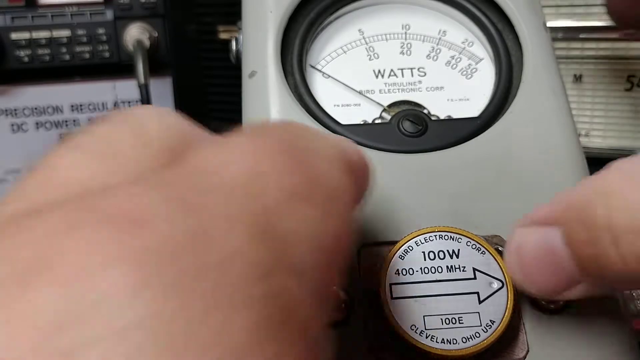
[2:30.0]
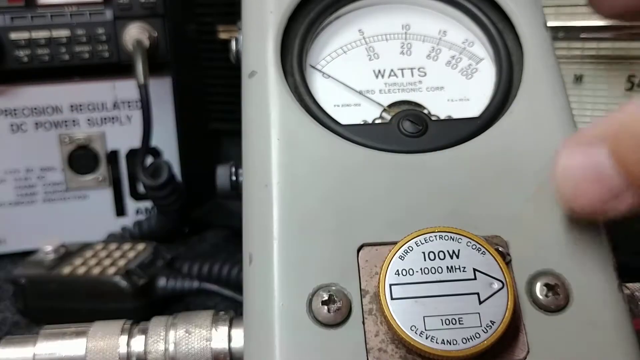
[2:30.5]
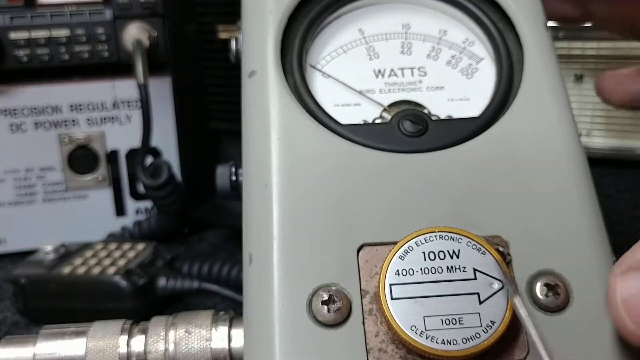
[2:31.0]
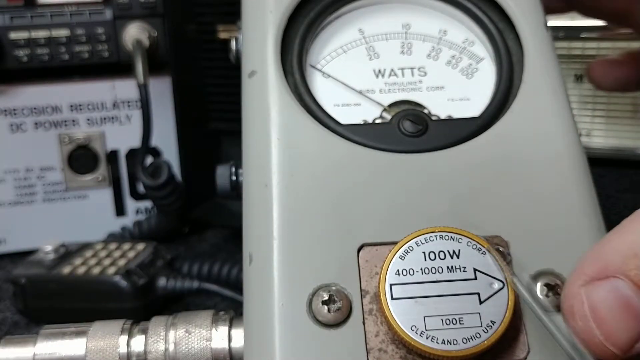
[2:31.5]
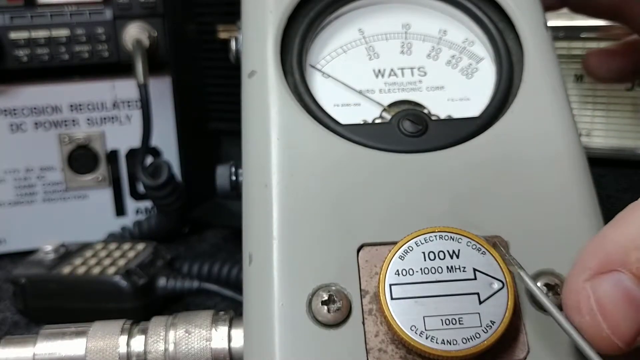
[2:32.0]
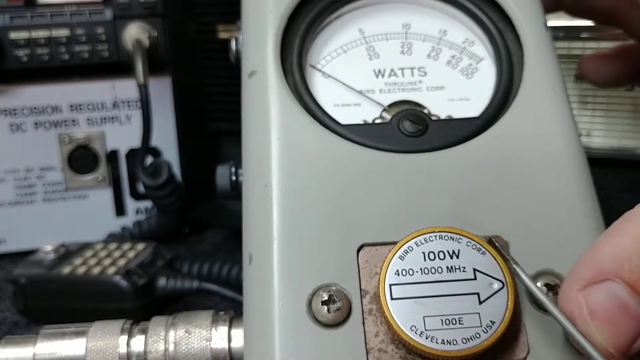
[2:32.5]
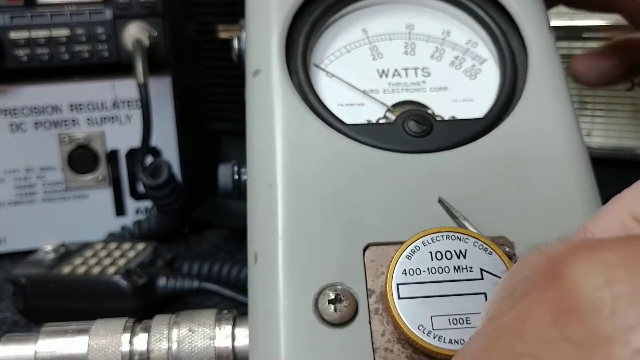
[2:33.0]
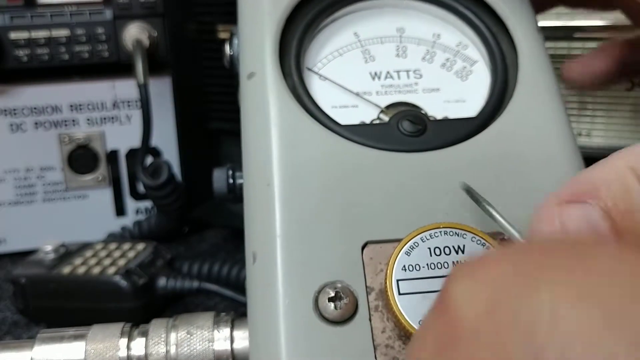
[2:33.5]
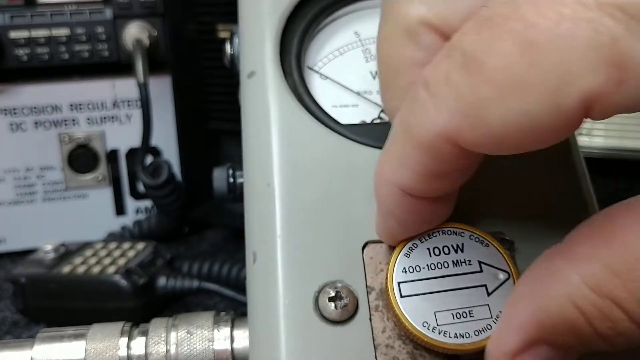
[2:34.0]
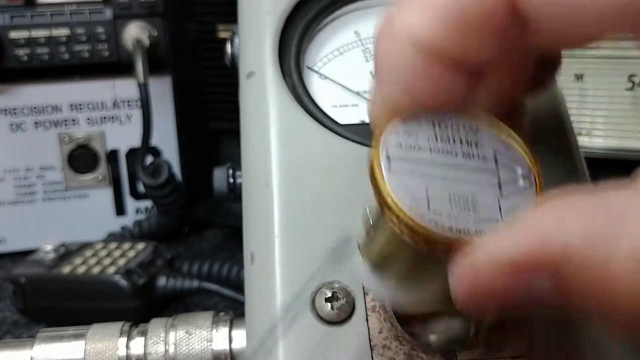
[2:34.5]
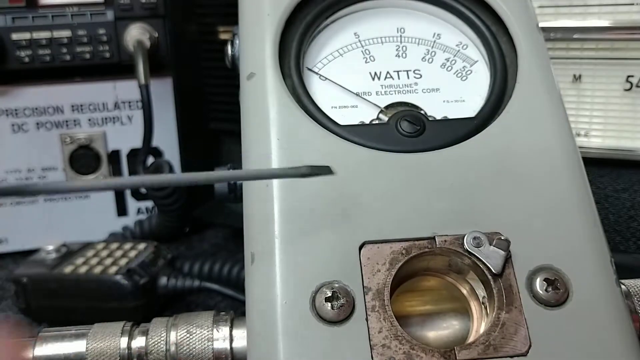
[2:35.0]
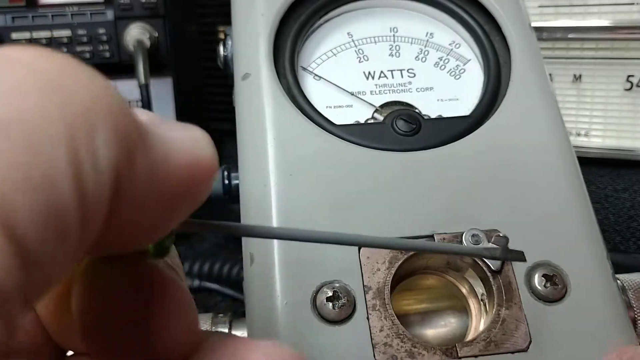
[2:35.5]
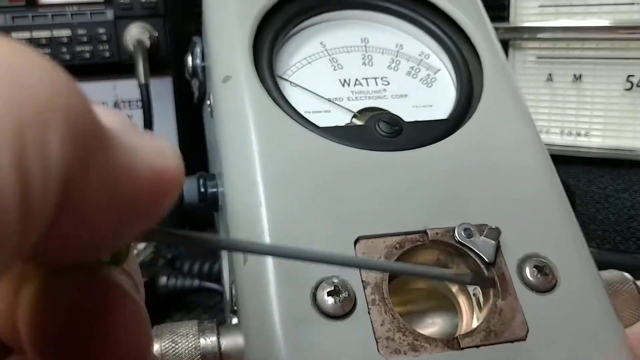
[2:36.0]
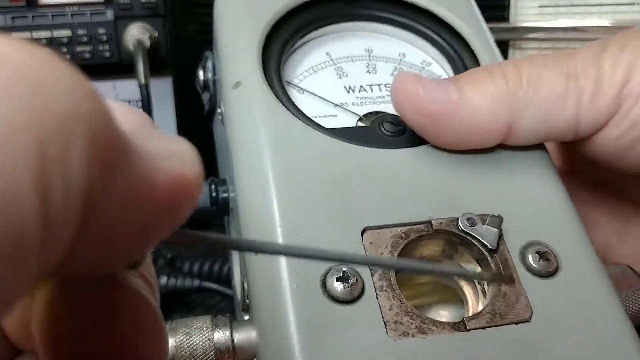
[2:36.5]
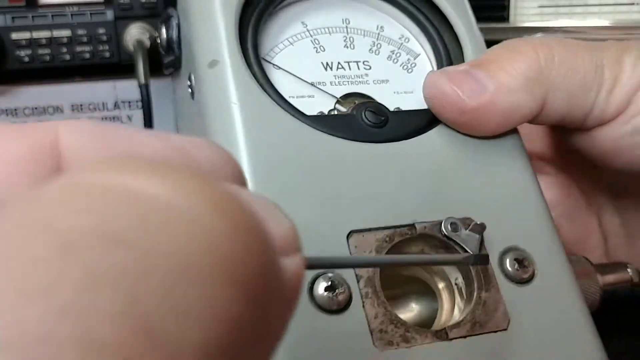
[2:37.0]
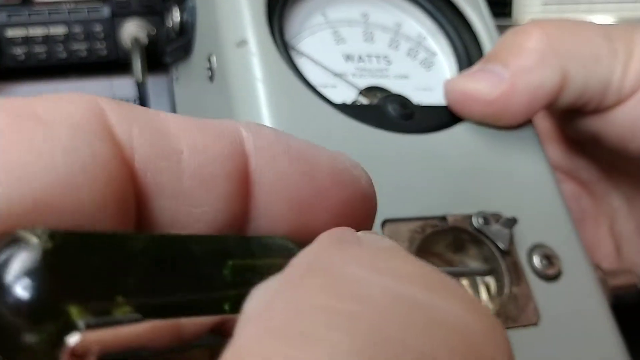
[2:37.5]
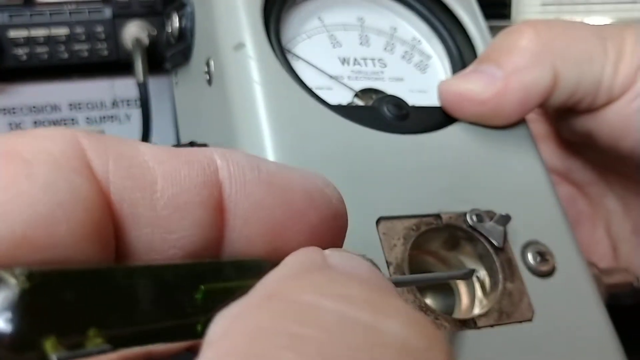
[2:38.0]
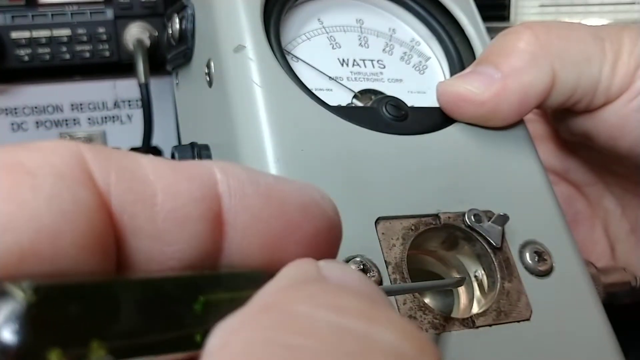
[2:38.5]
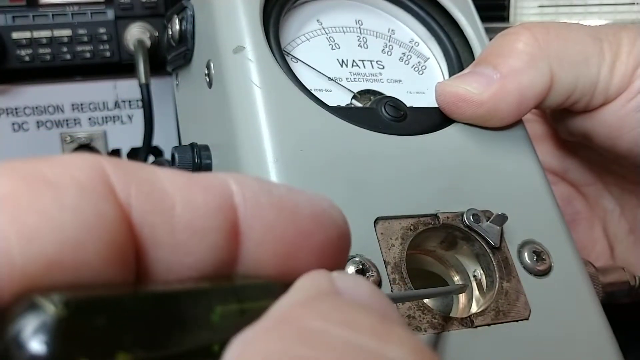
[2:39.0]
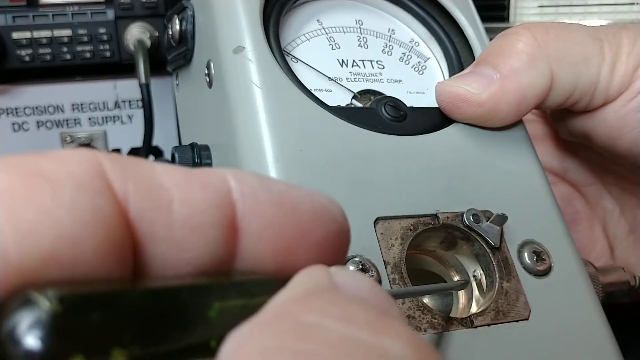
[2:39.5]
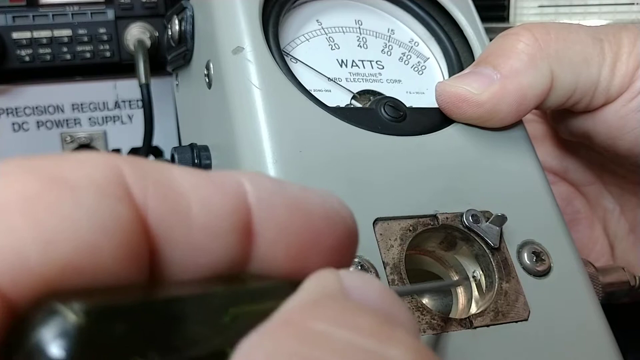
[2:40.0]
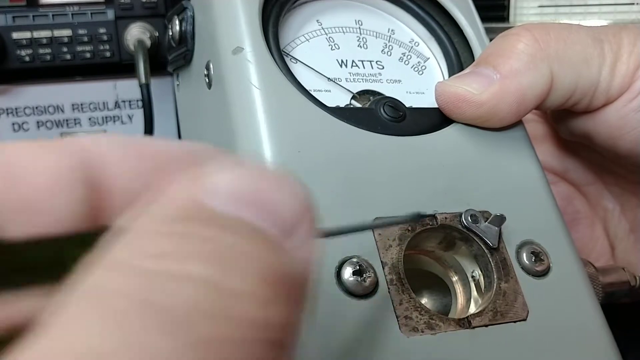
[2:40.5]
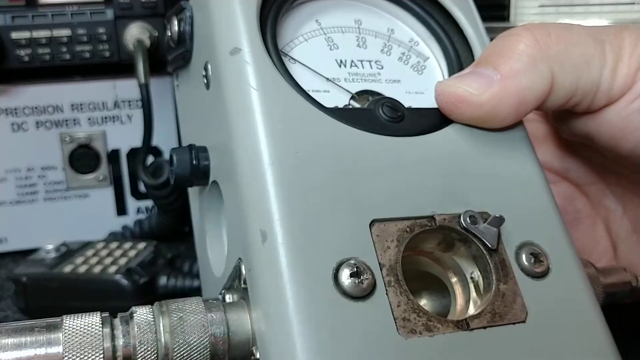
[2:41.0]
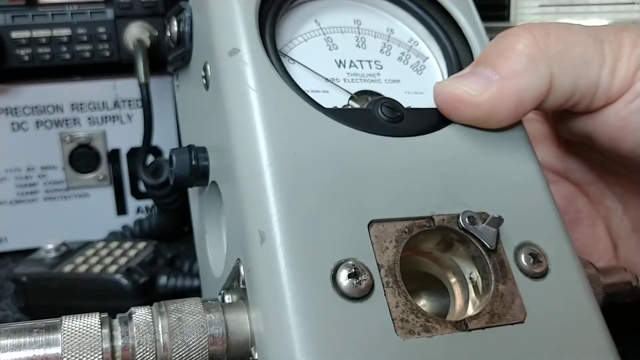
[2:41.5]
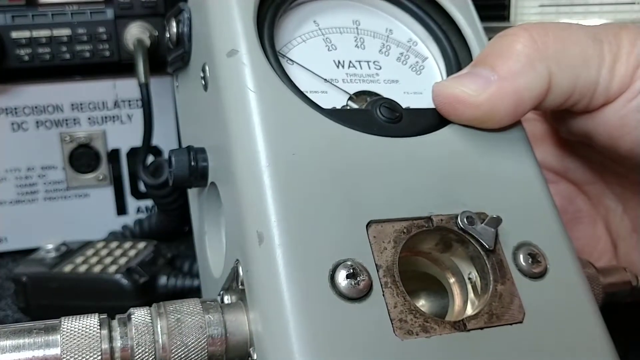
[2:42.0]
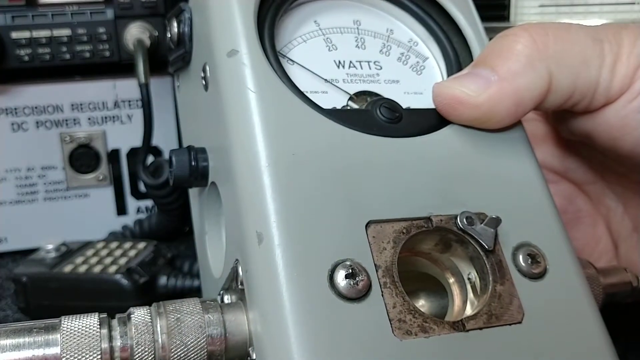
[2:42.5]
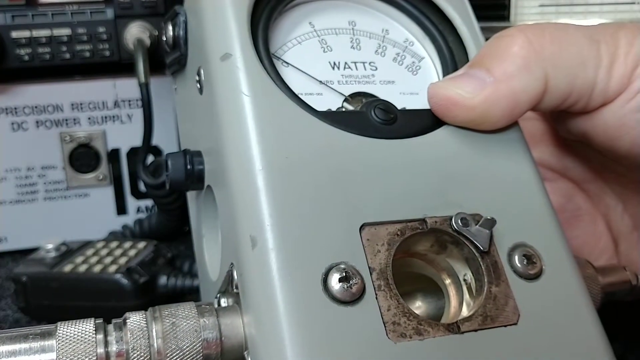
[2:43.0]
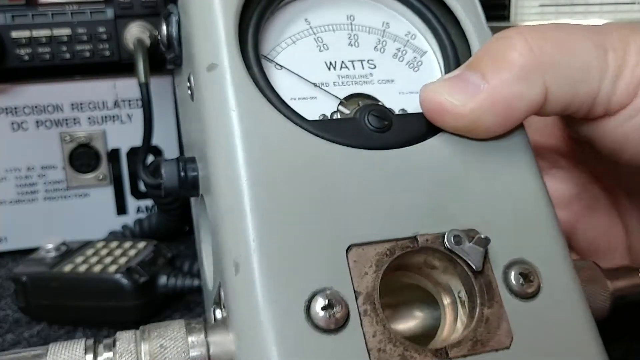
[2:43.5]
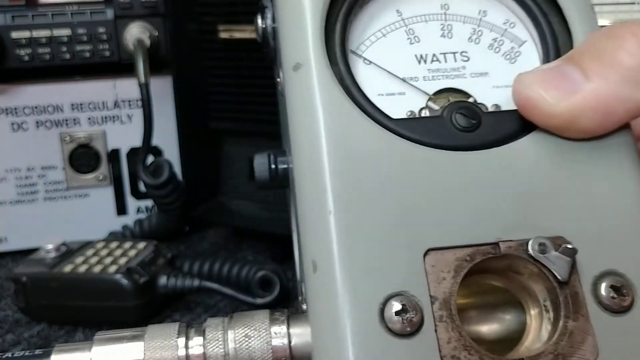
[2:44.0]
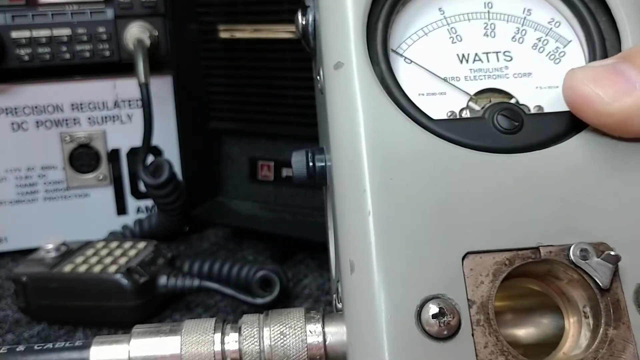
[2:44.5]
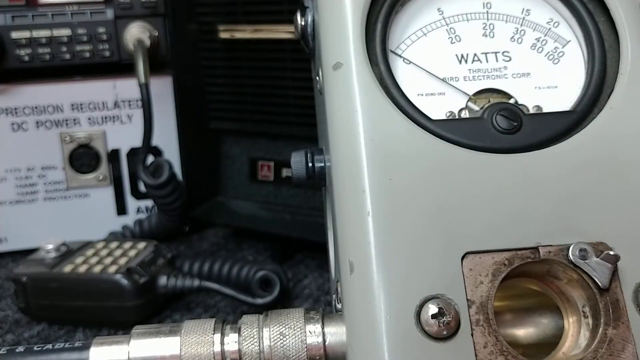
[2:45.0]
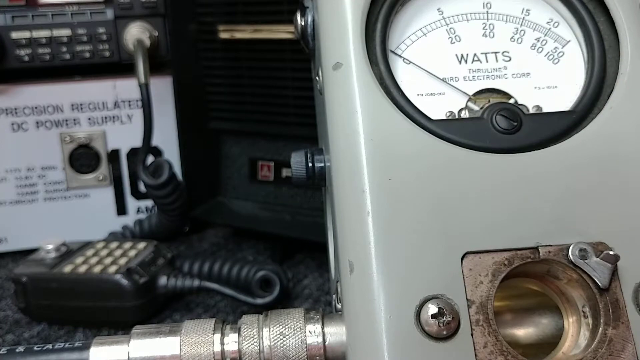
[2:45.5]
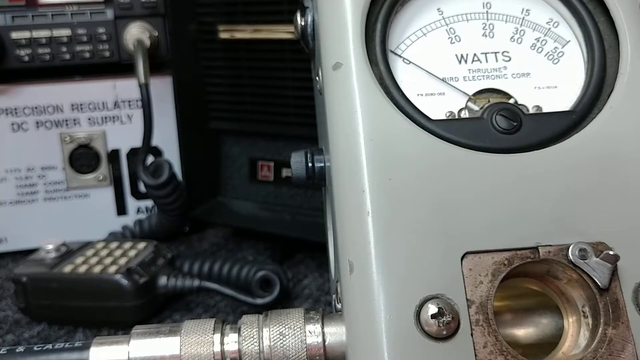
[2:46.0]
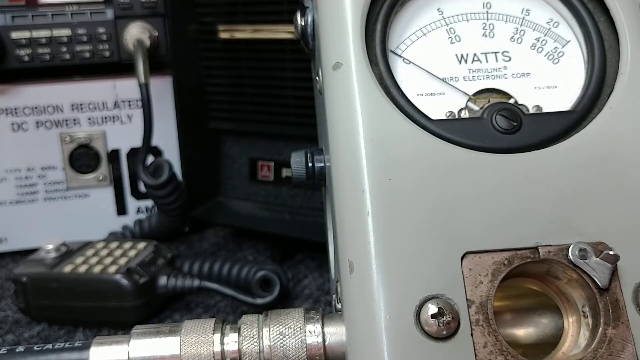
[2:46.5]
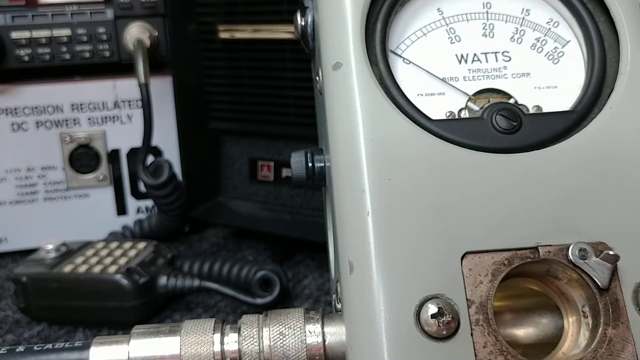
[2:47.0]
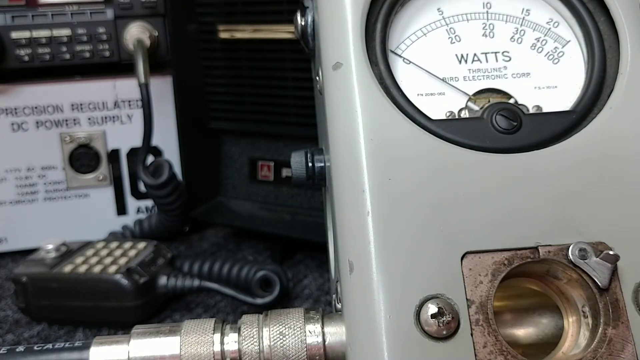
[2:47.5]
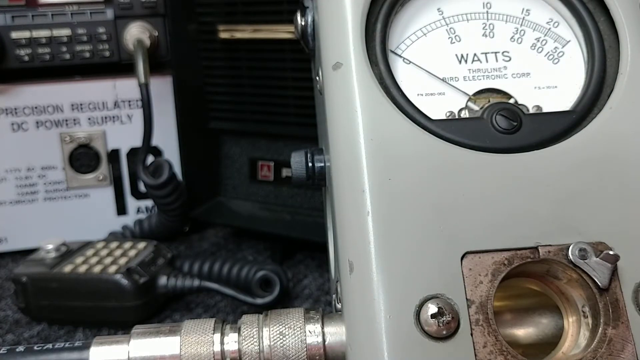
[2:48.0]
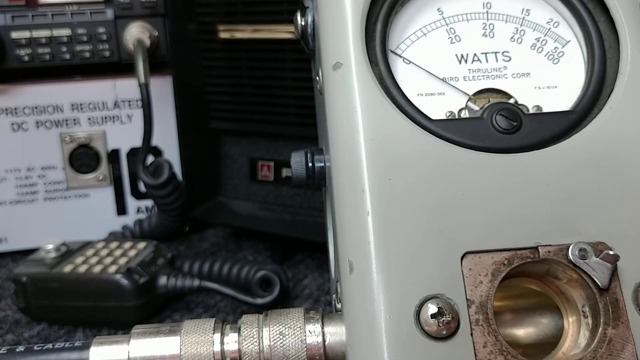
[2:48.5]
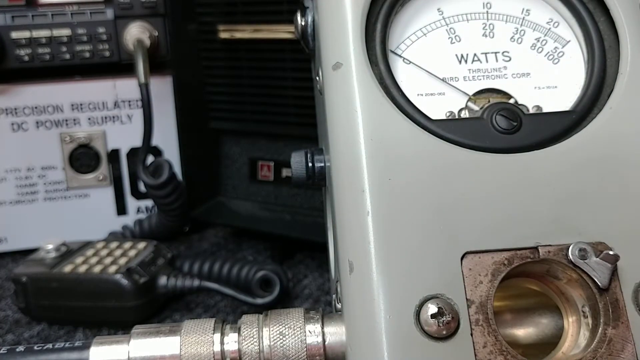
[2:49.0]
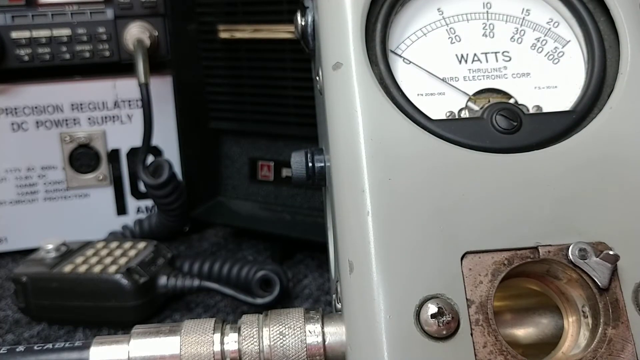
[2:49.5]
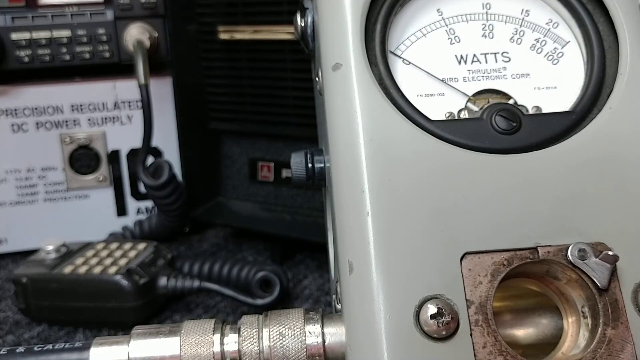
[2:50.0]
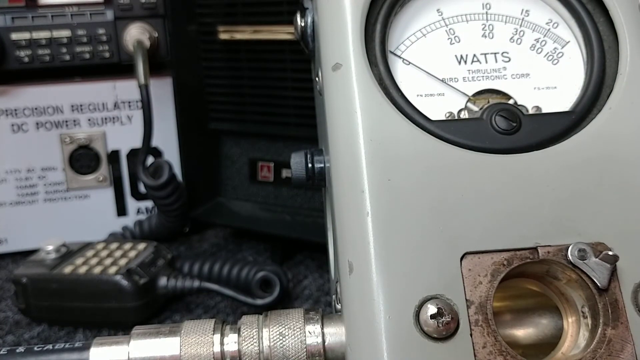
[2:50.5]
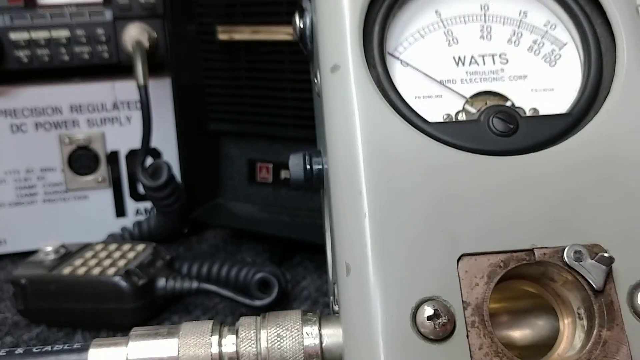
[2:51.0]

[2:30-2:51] A person seems to be attaching an object to a meter. The object has a silver top that says "100 watts" on it, a gold trim around it, and an arrow pointing to the right. They seem to use a screwdriver to pry it open, then pull it out with their right hand, revealing a hole in the middle of the meter where the object used to be, surrounded by gold metal. They then use another screwdriver, held in their left hand, and appear to scratch part of the metal that held the object, seemingly cleaning it with the screwdriver.